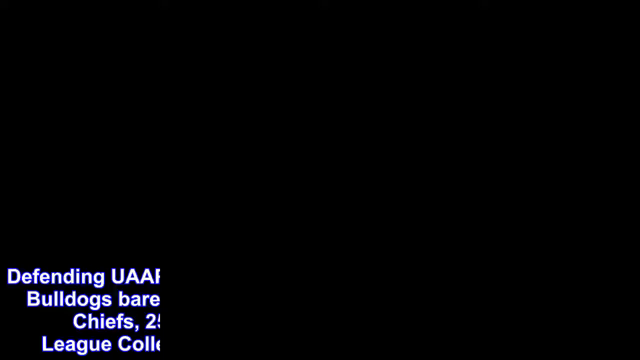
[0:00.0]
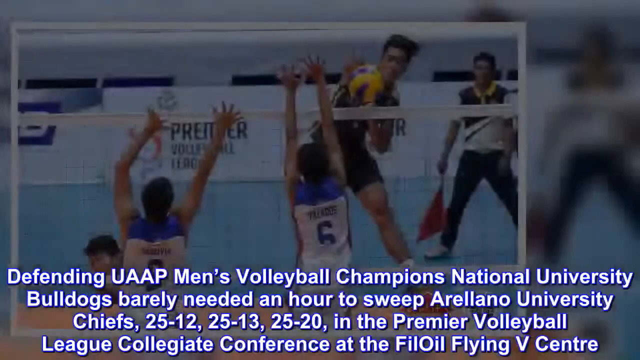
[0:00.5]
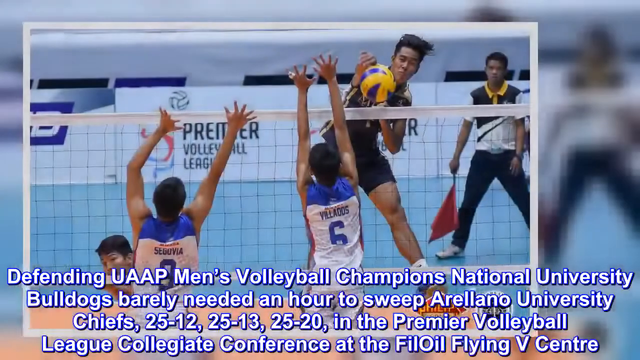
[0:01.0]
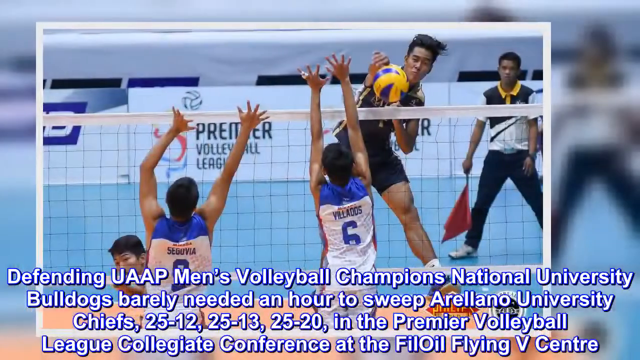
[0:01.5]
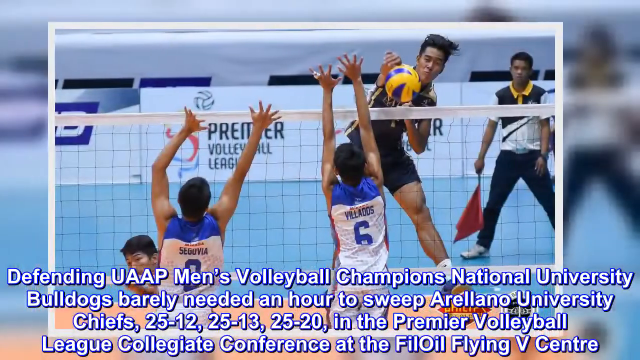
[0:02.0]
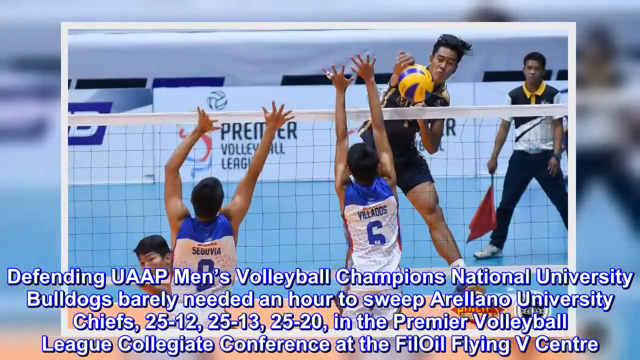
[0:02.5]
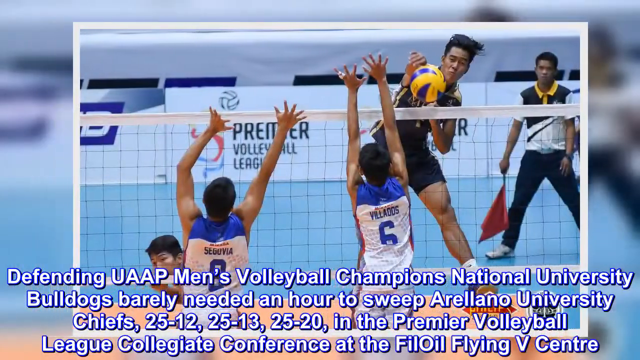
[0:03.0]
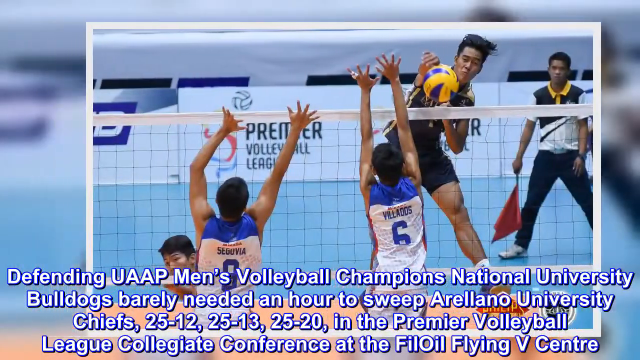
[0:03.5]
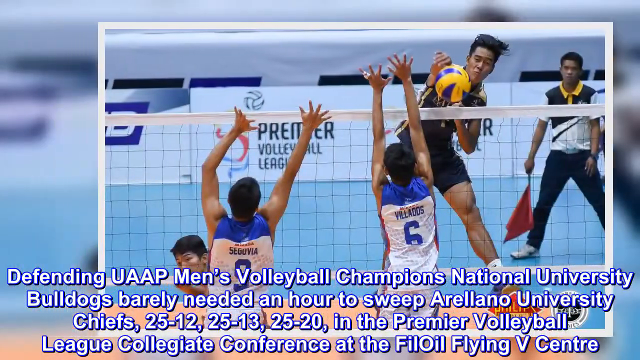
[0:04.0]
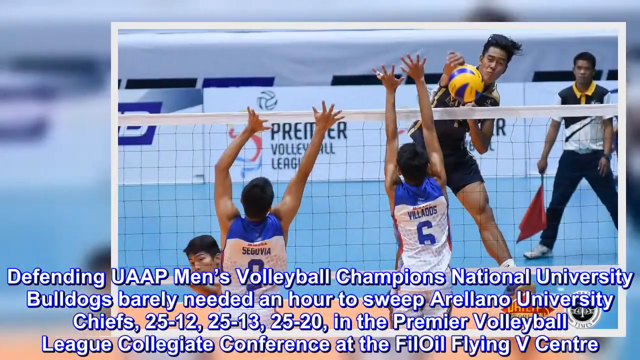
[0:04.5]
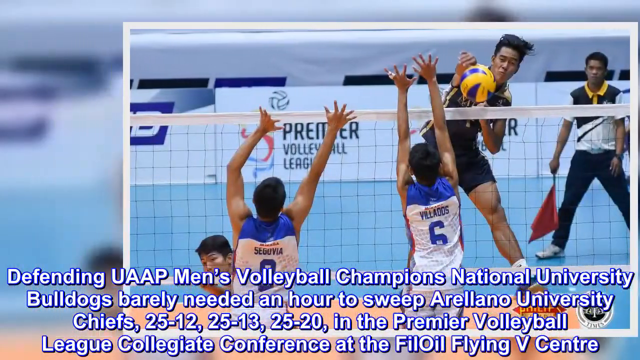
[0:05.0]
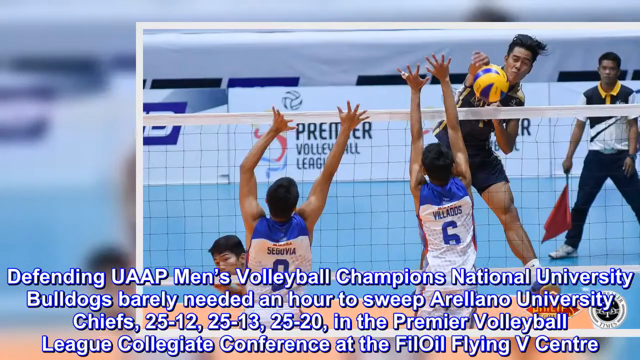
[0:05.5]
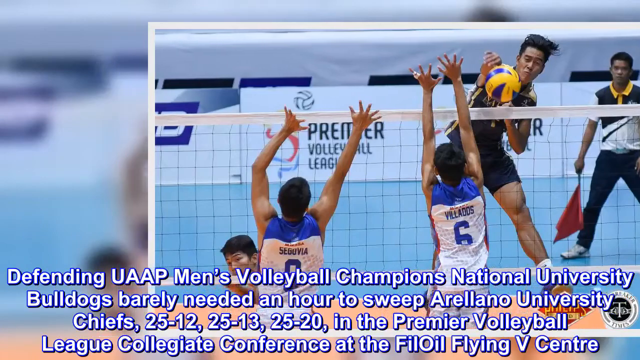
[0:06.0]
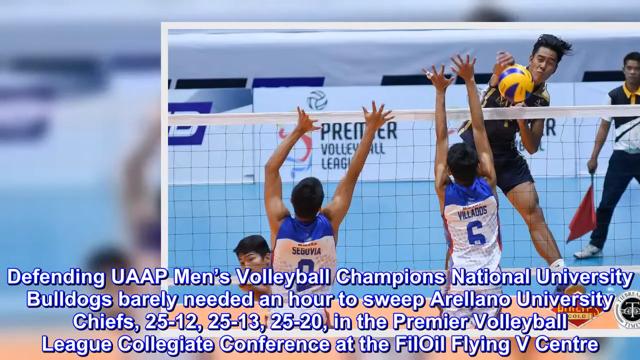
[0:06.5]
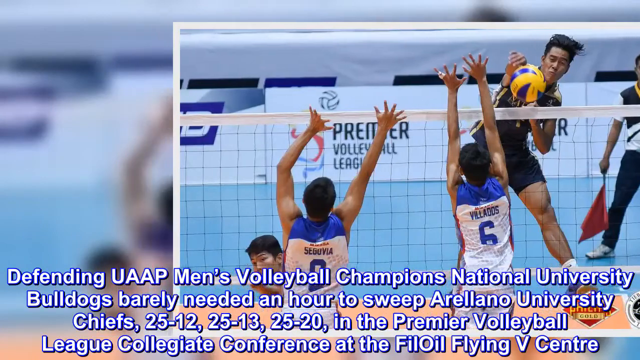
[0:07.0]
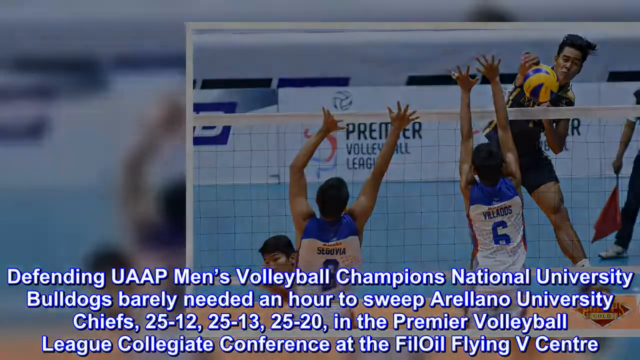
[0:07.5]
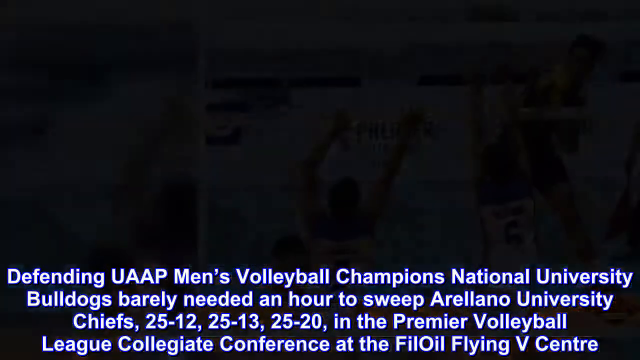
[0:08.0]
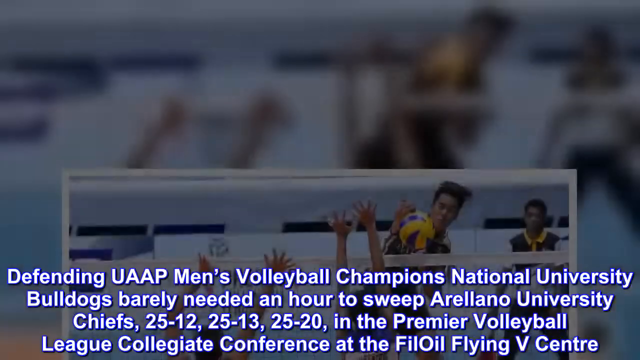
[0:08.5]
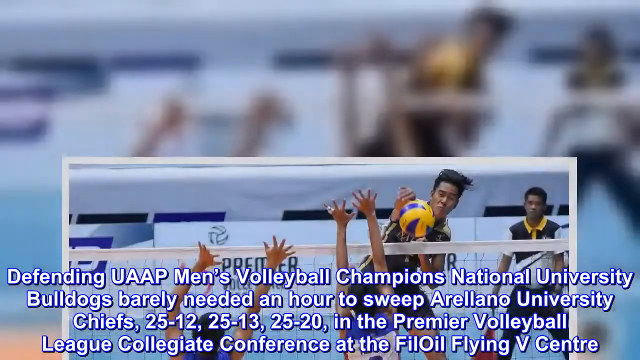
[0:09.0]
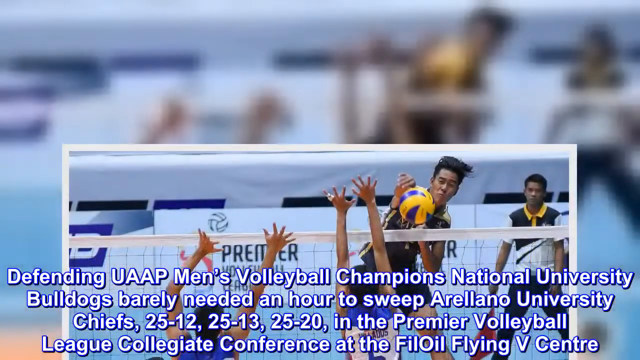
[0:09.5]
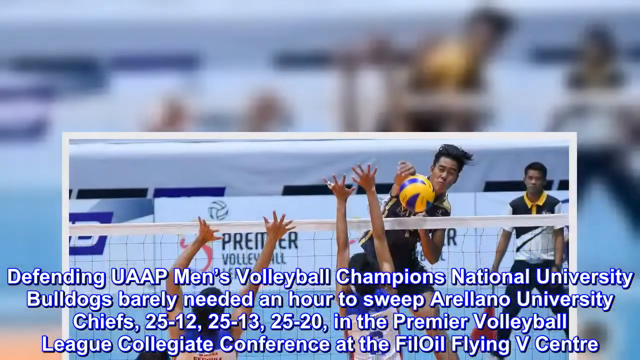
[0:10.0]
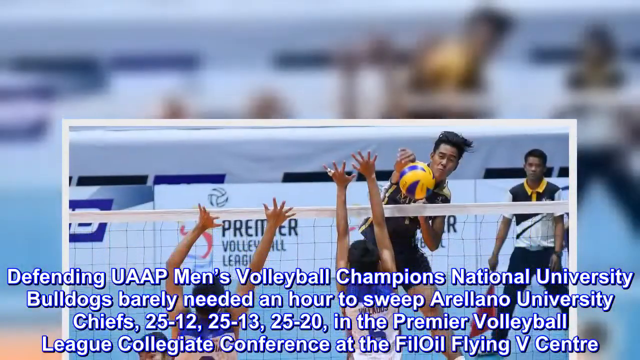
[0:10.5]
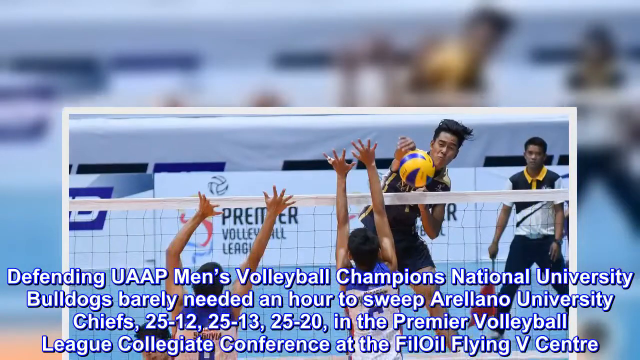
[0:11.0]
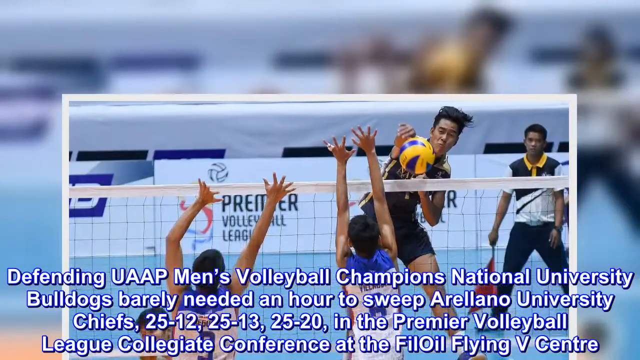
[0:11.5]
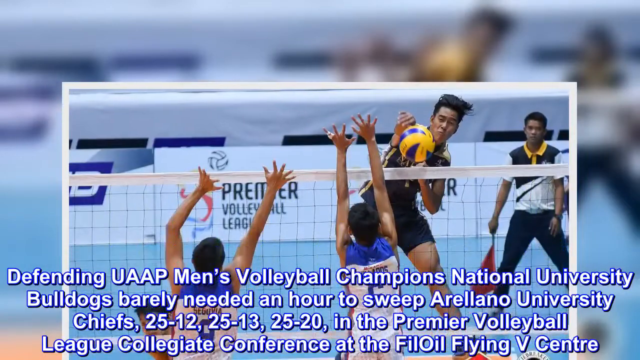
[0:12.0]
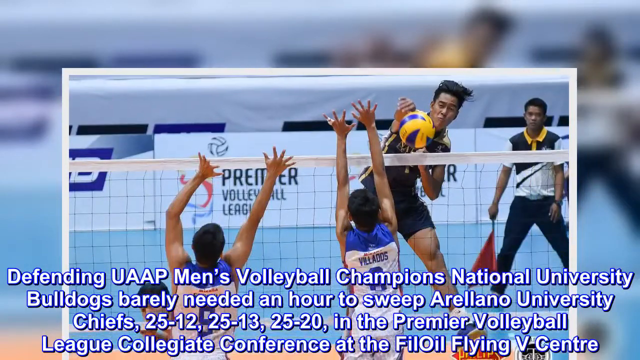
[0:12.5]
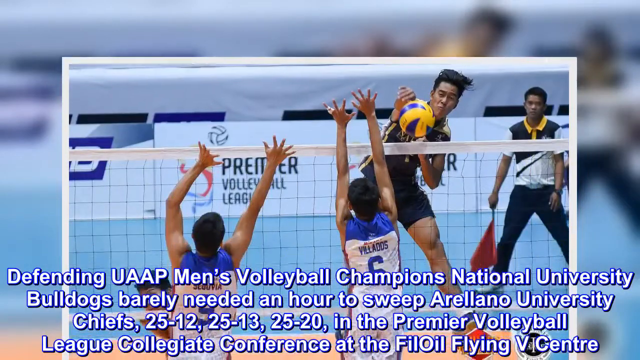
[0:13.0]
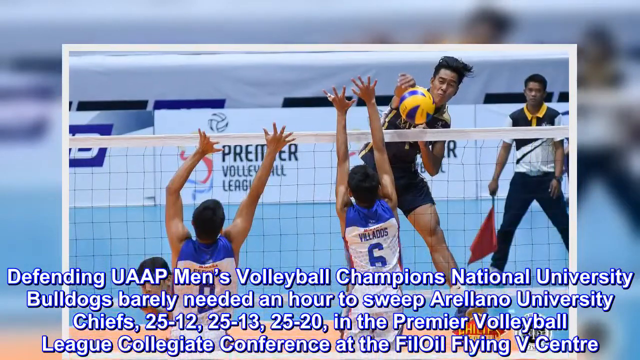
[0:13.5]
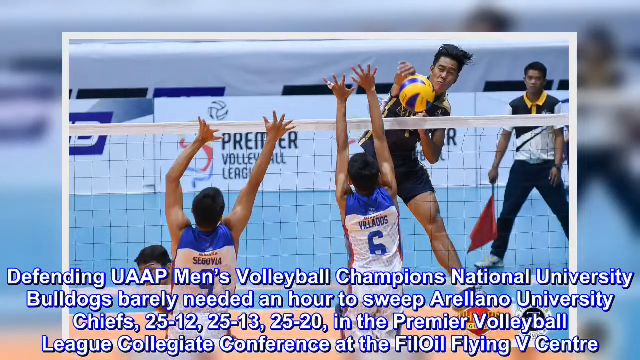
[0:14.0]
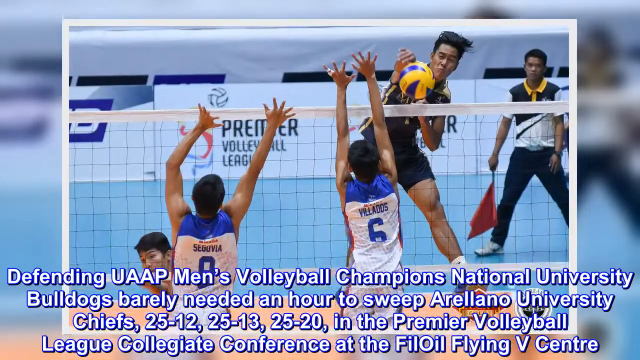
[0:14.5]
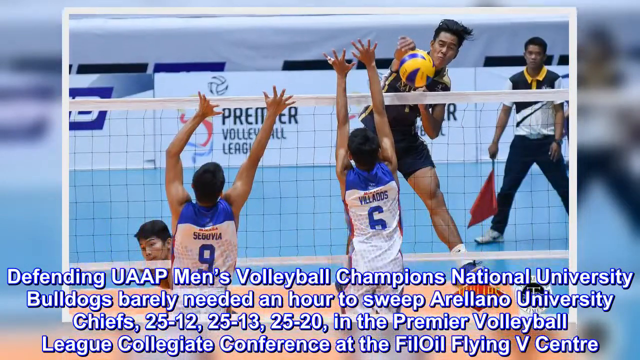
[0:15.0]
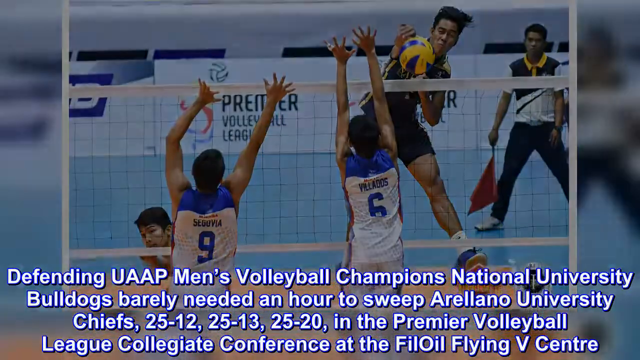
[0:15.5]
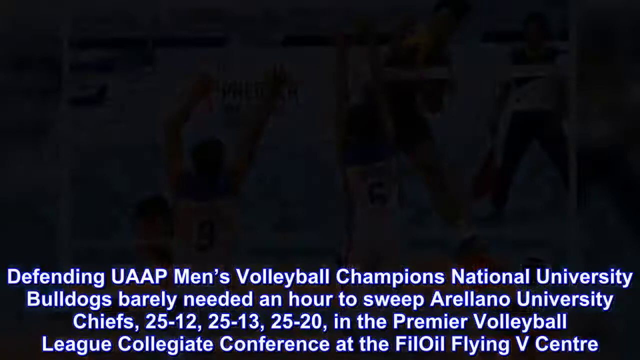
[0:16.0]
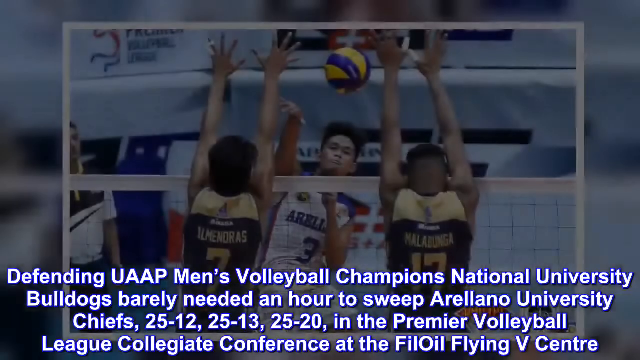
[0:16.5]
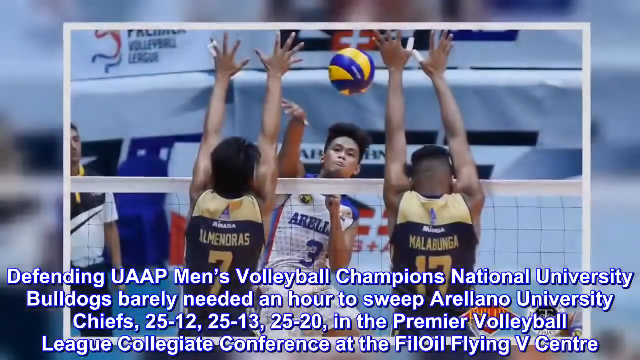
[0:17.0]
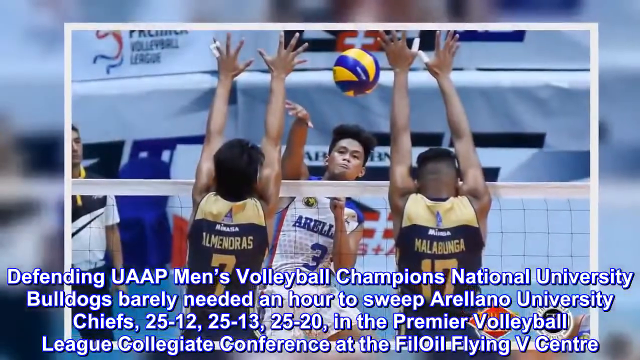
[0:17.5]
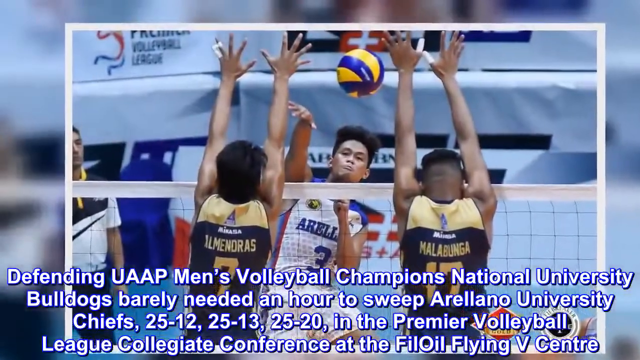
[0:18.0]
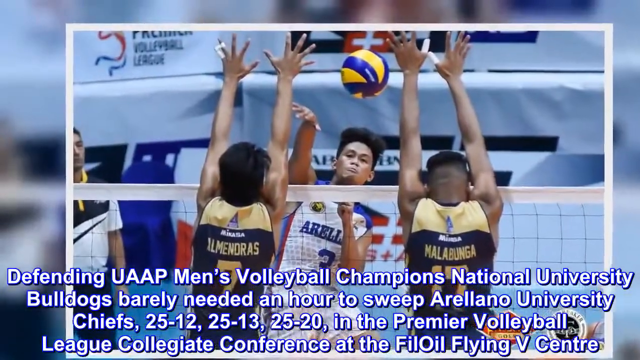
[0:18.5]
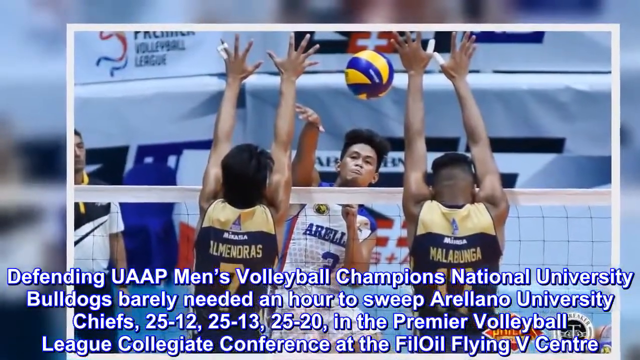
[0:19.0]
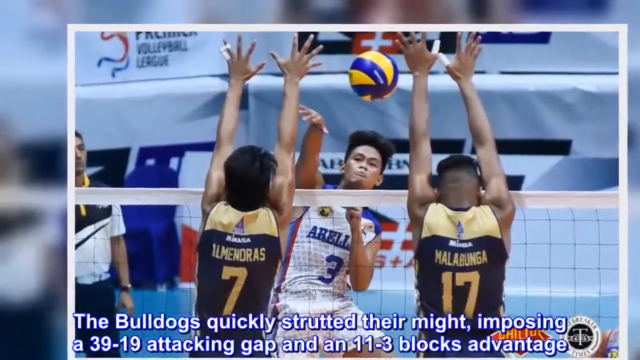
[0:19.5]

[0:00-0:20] The UAAP Men's Volleyball Championships are shown, with a white and blue team and a team in darker blue and purple shirts. Text reads: "Defending UAAP Men's Volleyball Champions, National University Bulldogs barely needed an hour to sweep Arellano University Chiefs 25-12, then 25-13, then 25-20 in the Premier Volleyball League Collegiate Conference at the Philoil Flying V Center." In the picture, a referee is to the right behind the net, holding a red flag, while a player from one team jumps in the air and slams the yellow and purple ball toward his left. A sign in the background says "Premier Volleyball League."